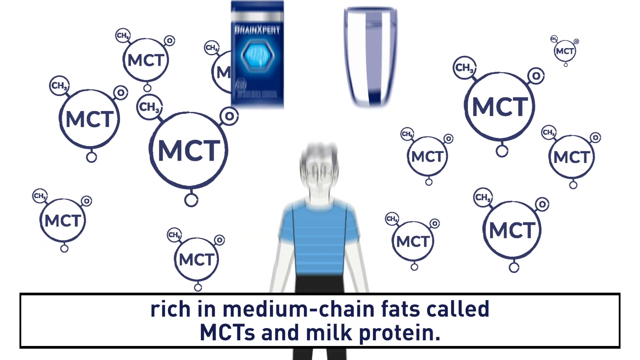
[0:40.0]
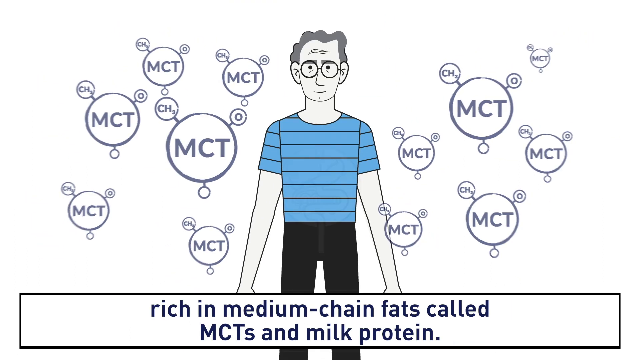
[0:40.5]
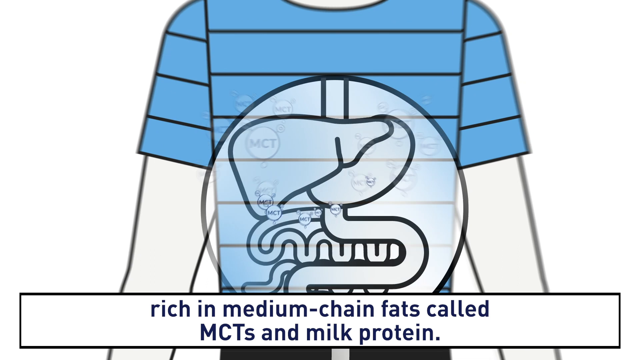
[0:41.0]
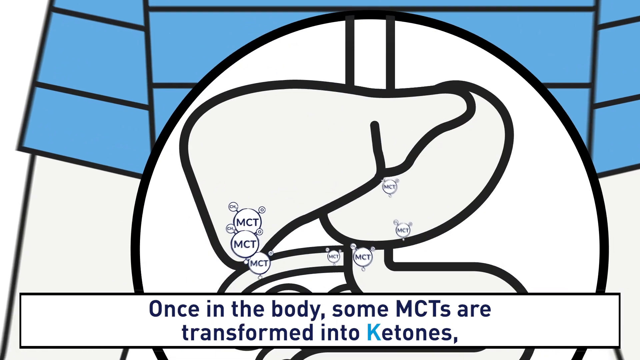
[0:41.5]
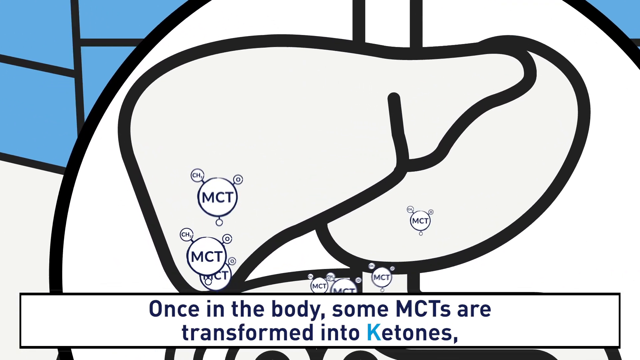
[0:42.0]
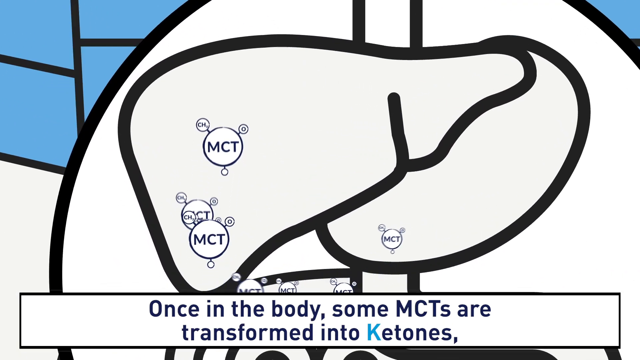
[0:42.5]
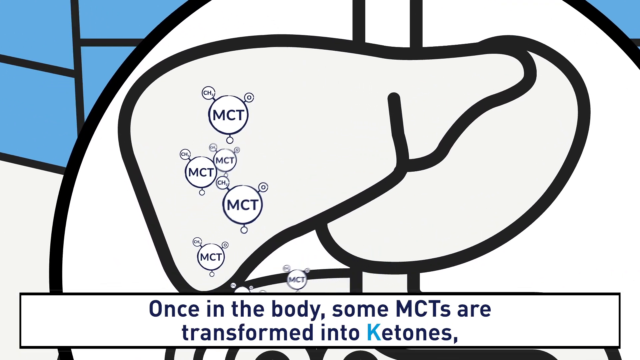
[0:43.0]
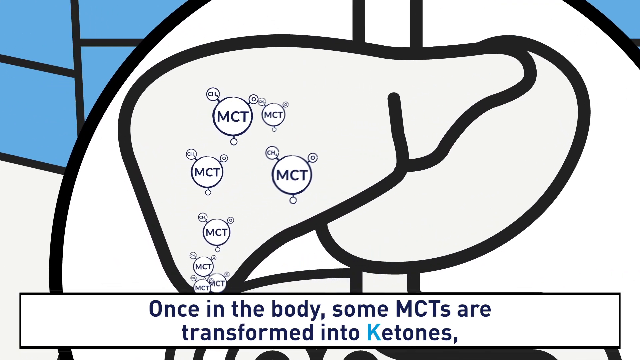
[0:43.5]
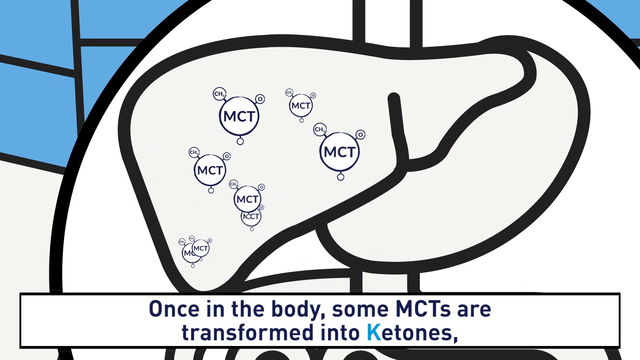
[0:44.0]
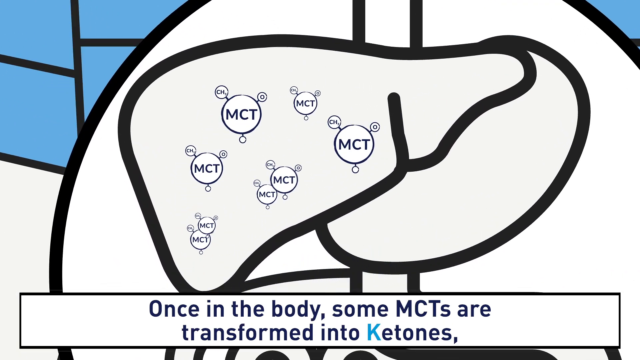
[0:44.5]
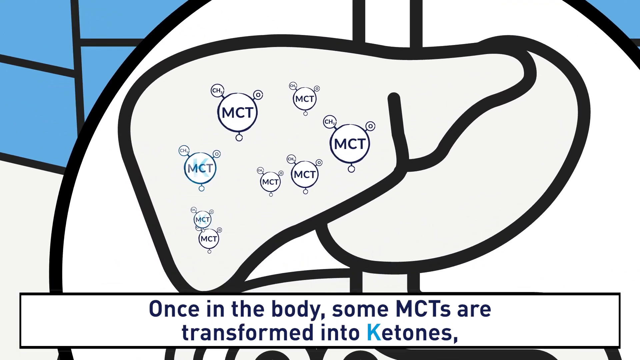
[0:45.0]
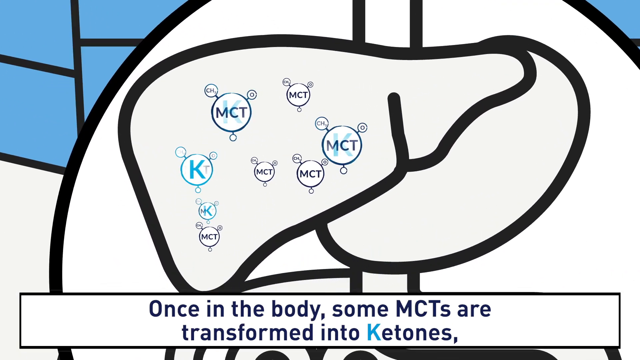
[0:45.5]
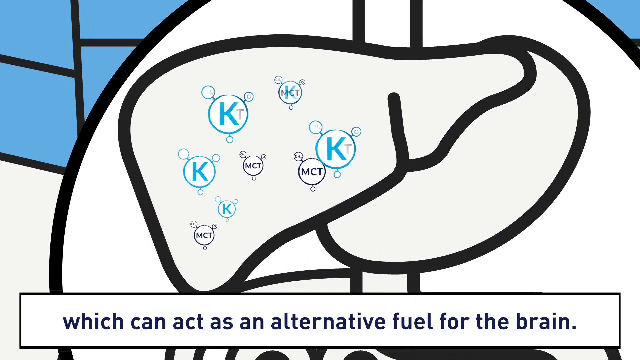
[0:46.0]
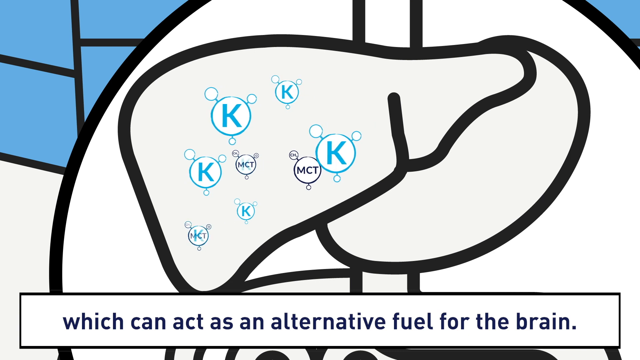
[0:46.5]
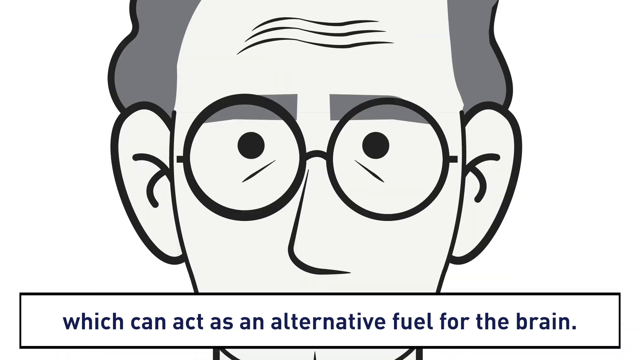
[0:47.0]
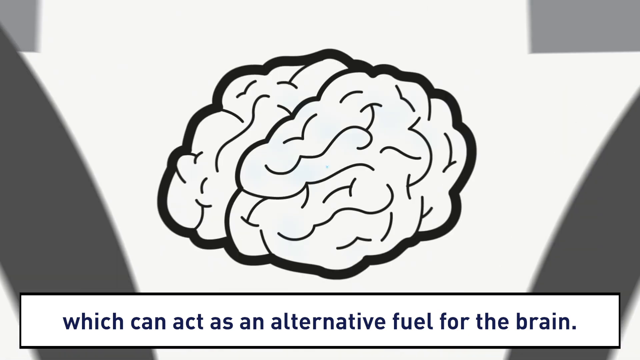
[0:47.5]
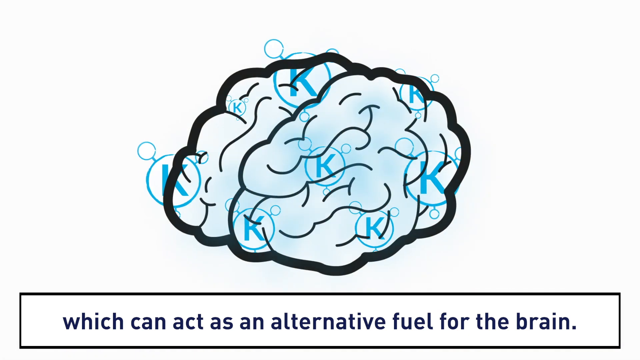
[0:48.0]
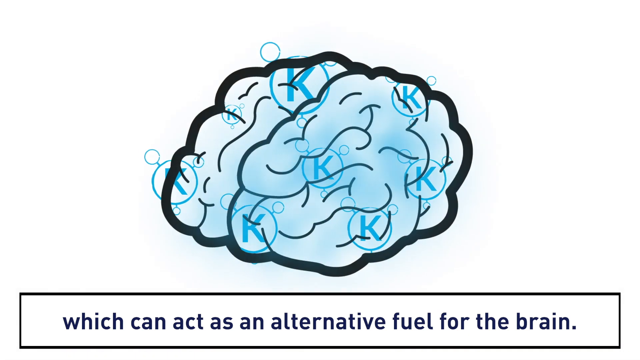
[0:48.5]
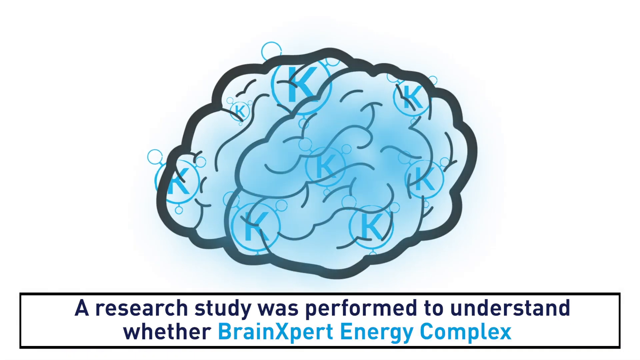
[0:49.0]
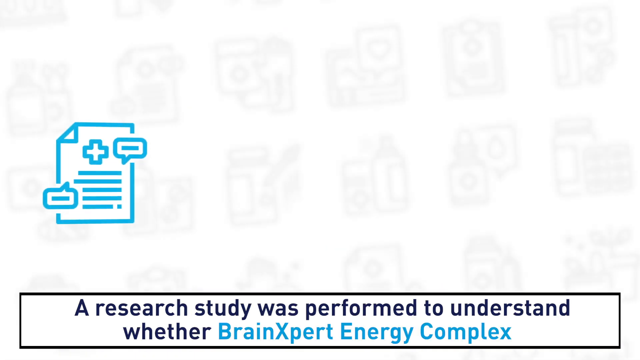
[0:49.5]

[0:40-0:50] An animated drawing shows a man in a blue shirt and black pants. The text at the bottom says "rich in medium chain fats called MCTs and milk protein", and numerous circles with the letters MCT are on the screen, each with a smaller attached circle reading "CH3", another reading "O", and a third with no letters. The view then goes inside the man's digestive system, still a black-and-white animated drawing, where the MCT circles move around. The bottom text says "once in the body, some MCTs are transformed into ketones" as they move through his system and change from MCT to K. The view goes up to the brain, showing a K inside a circle there, with the text "which can act as an alternative fuel for the brain", and then many Ks appear in the brain.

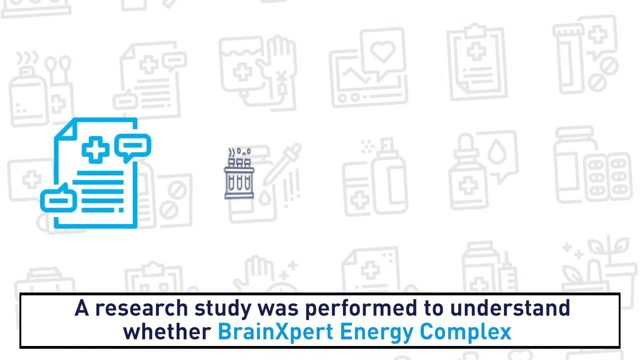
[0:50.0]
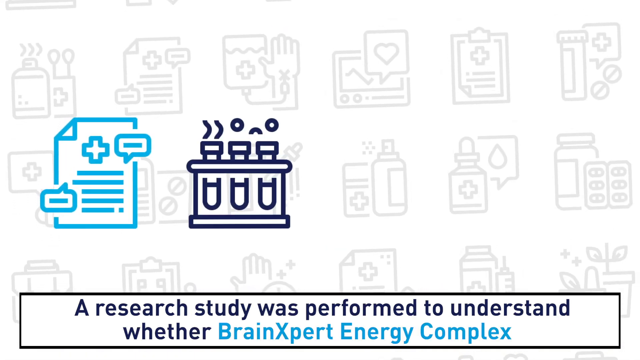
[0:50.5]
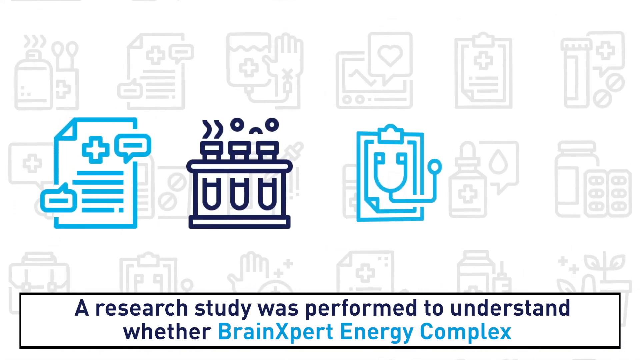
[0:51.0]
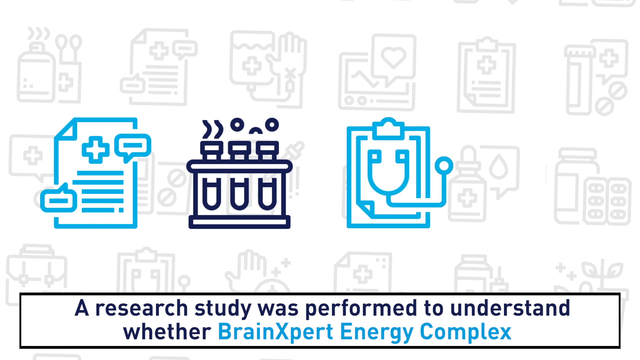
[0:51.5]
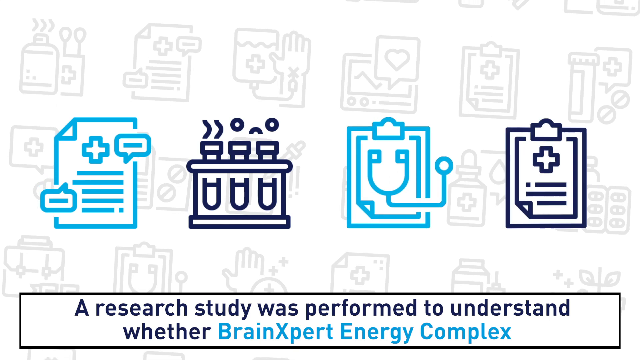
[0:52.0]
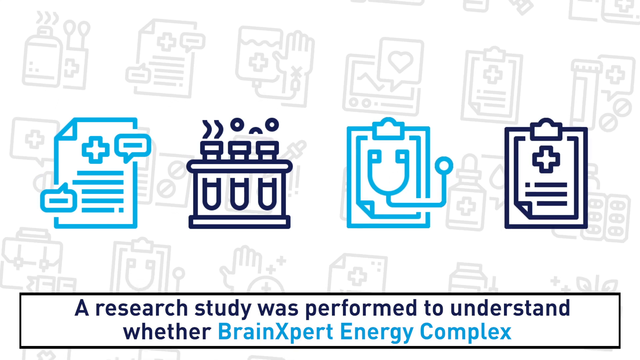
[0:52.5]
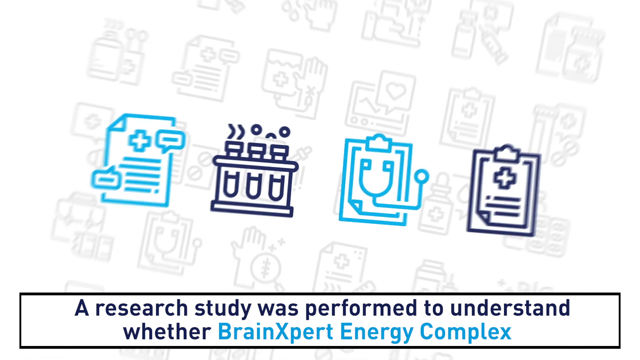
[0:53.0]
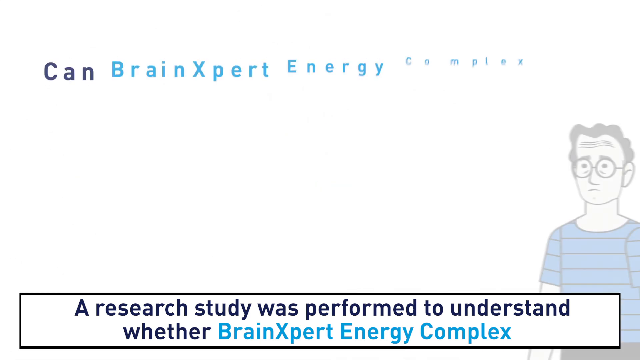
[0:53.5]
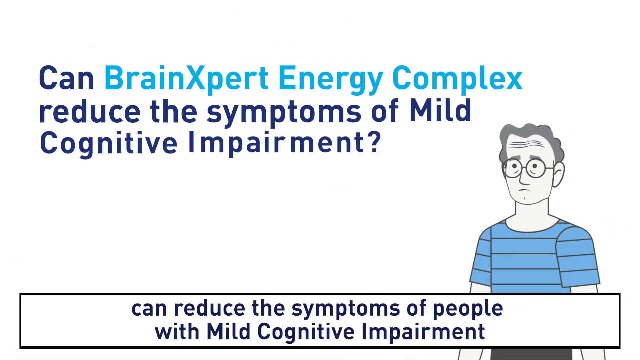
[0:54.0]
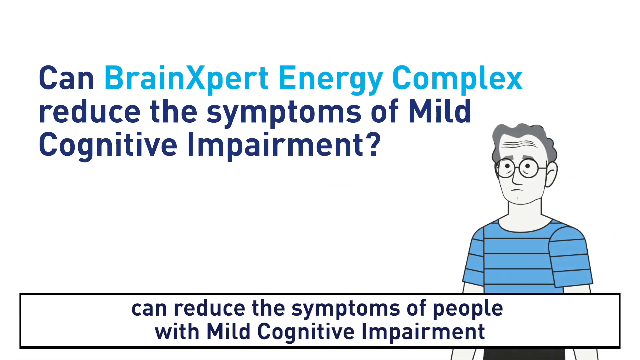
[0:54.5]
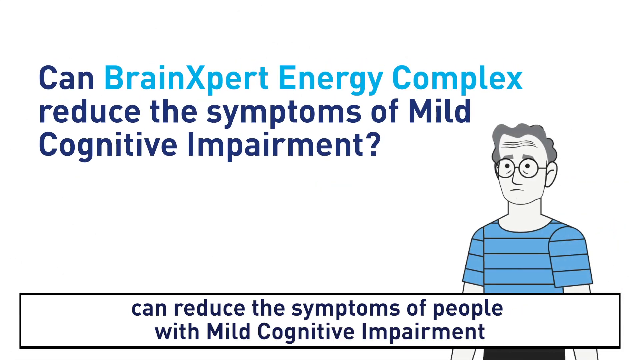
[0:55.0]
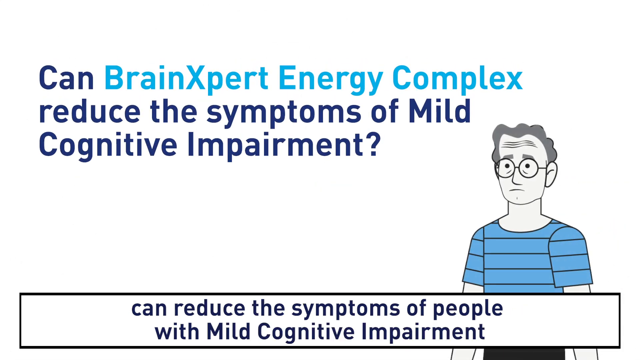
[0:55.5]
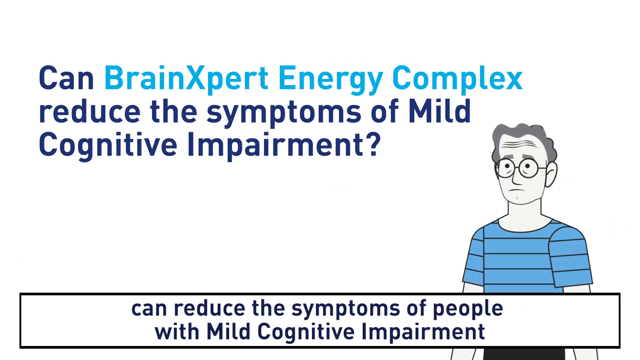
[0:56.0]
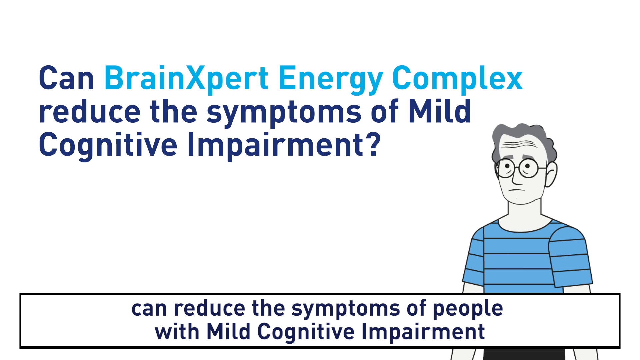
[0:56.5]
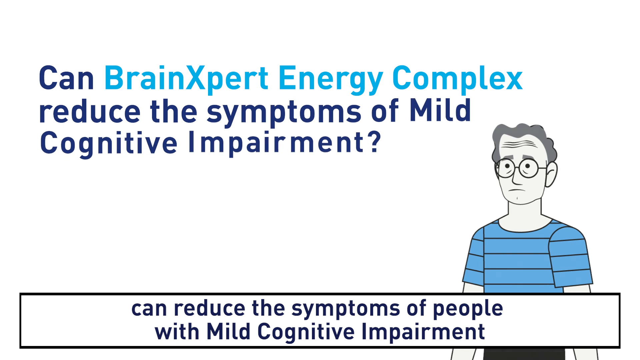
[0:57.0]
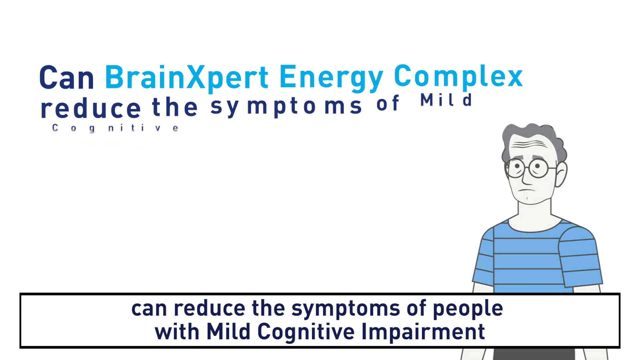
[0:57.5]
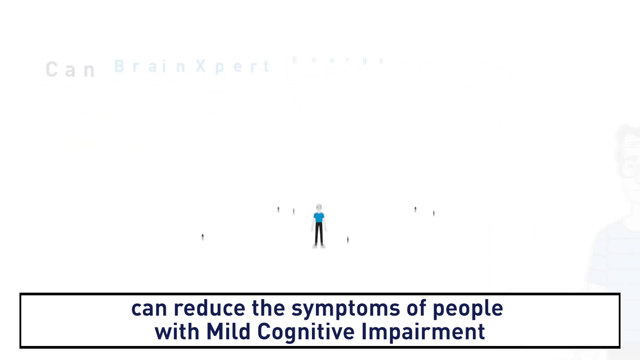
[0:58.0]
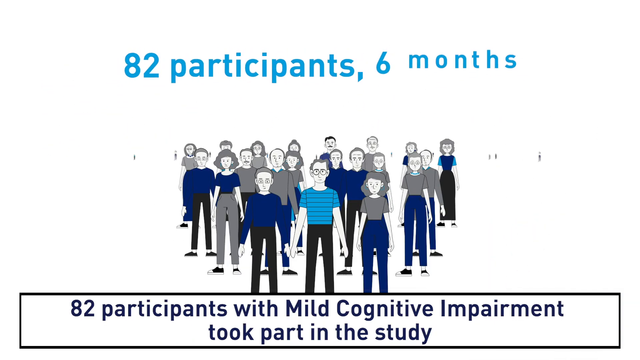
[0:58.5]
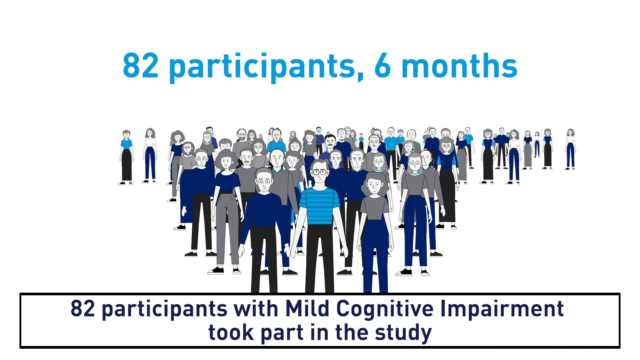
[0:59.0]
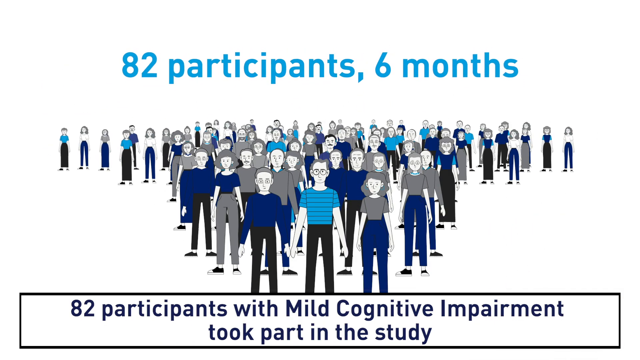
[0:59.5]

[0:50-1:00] Text at the bottom reads "a research study was performed to understand whether brain expert energy complex". Above are four images in blue and black or dark blue: one looks like paper, one looks like test tubes, the third looks like a stethoscope, and the fourth looks like a clipboard holding a document, apparently for a hospital setting. That spins out of the way and the next slide pops up, with the top text "can brain expert energy complex reduce the symptoms of mild cognitive impairment?" The man appears in a blue shirt with horizontal stripes and glasses, and the bottom text says "can reduce the symptoms of people with mild cognitive impairment". The top text disappears and is replaced by "82 participants six months" in blue. In the middle appear what look like men and women in different-colored shirts, pants and sneakers, most following the same pattern, while the bottom says "82 participants with mild cognitive impairment took part in the study". More people are added, apparently reaching a total of 82.